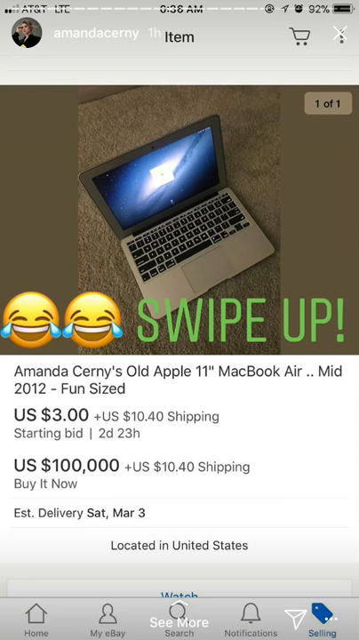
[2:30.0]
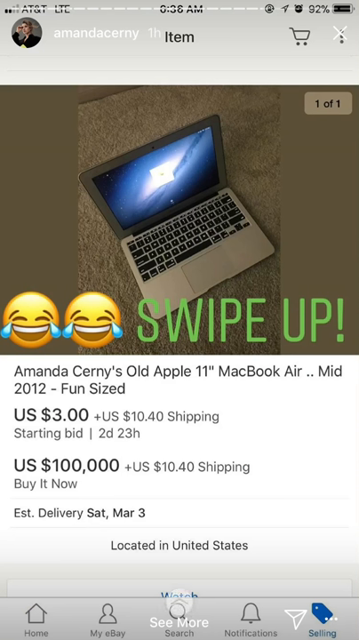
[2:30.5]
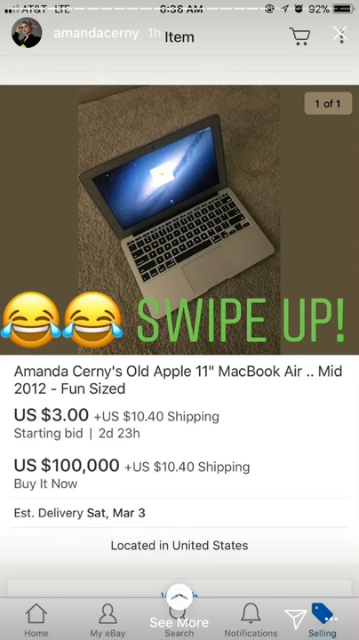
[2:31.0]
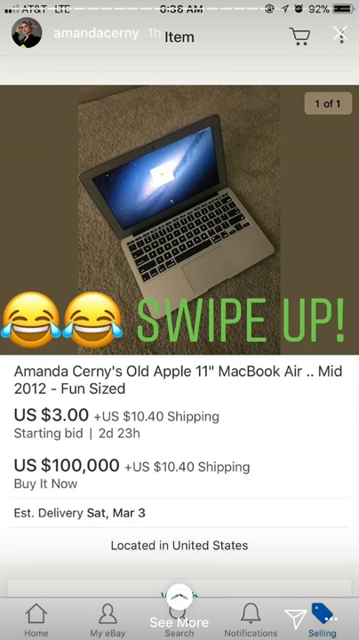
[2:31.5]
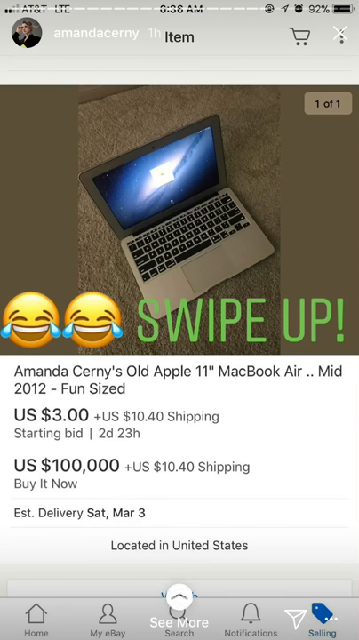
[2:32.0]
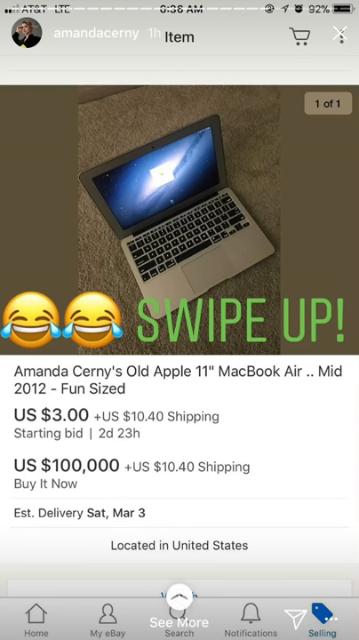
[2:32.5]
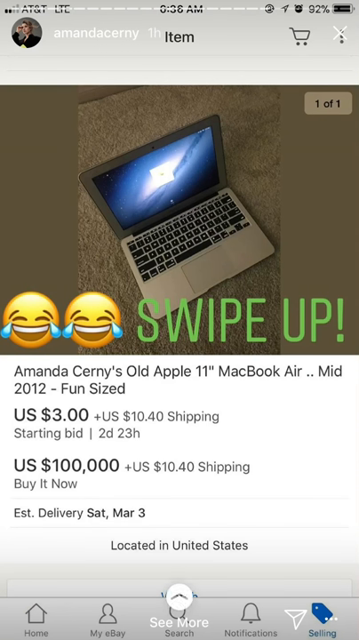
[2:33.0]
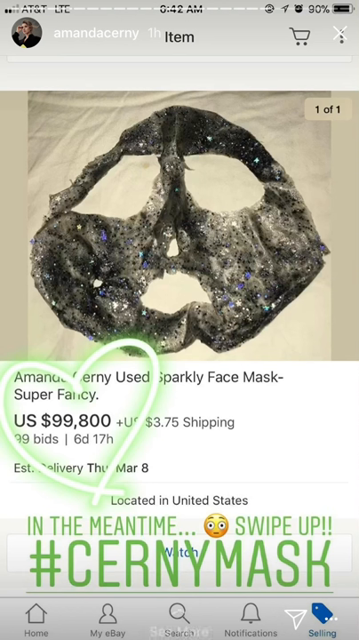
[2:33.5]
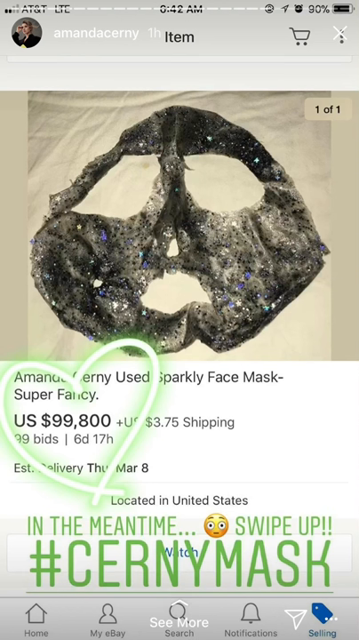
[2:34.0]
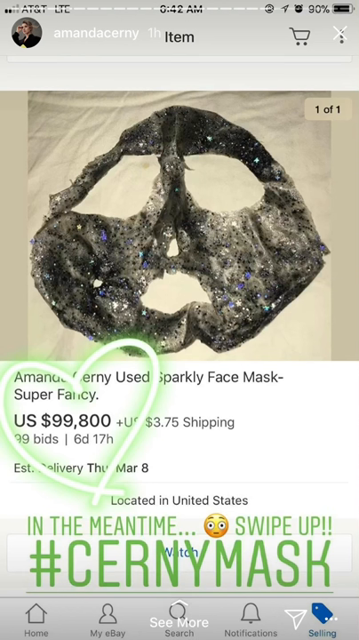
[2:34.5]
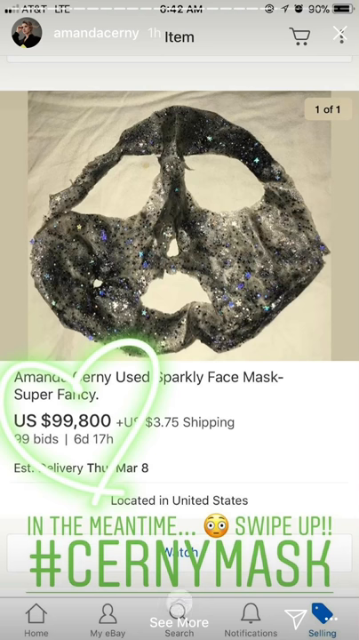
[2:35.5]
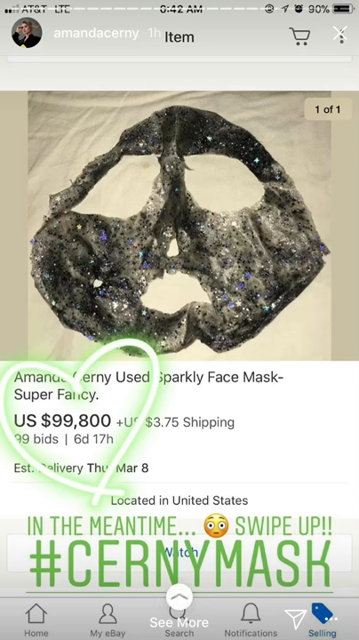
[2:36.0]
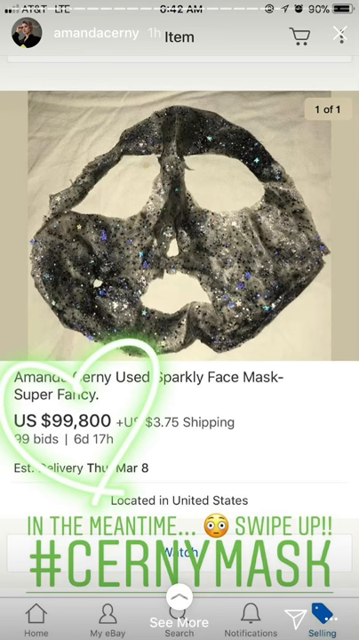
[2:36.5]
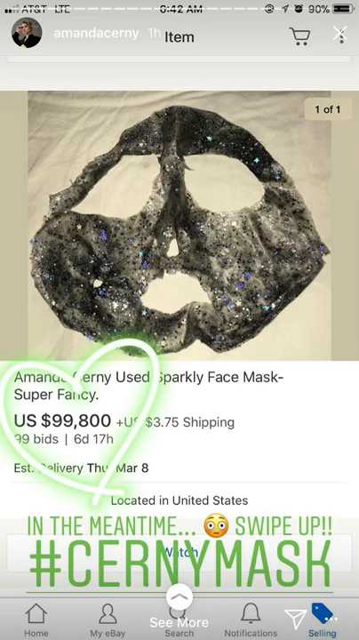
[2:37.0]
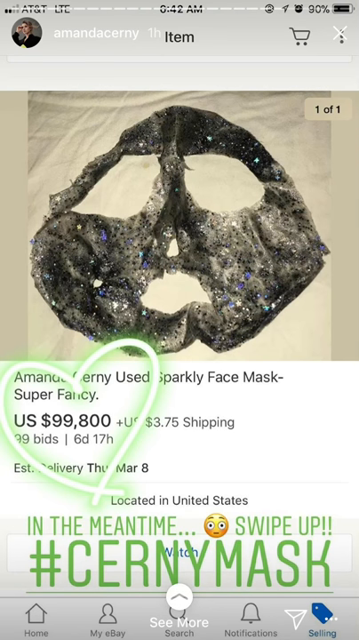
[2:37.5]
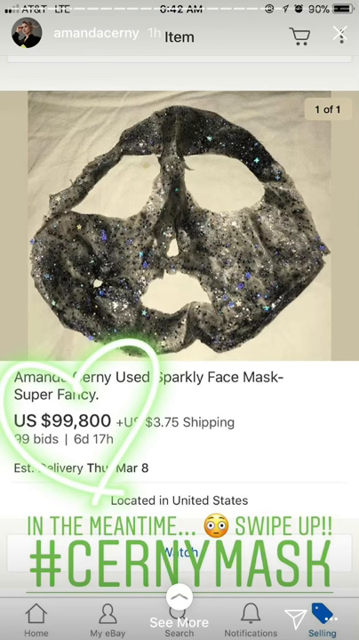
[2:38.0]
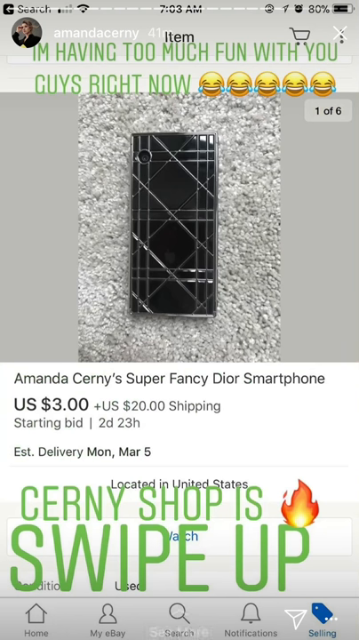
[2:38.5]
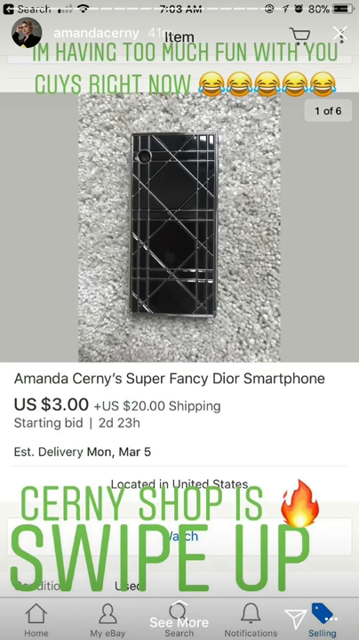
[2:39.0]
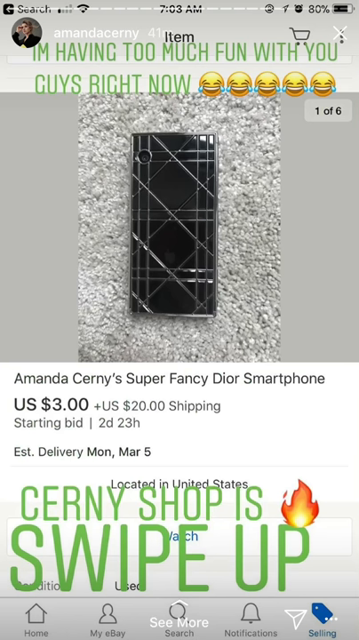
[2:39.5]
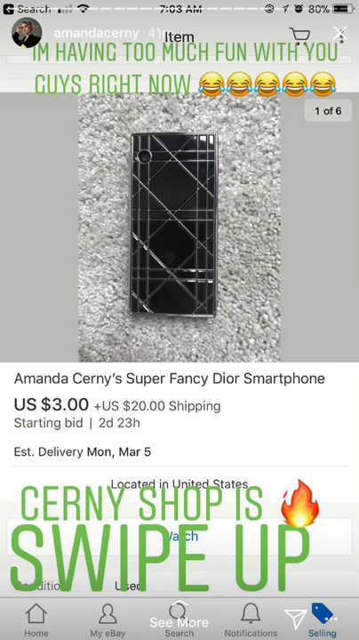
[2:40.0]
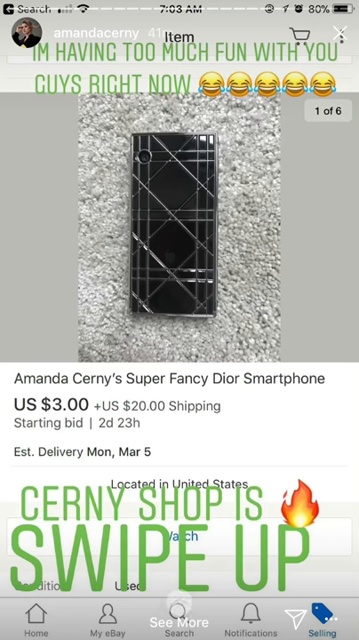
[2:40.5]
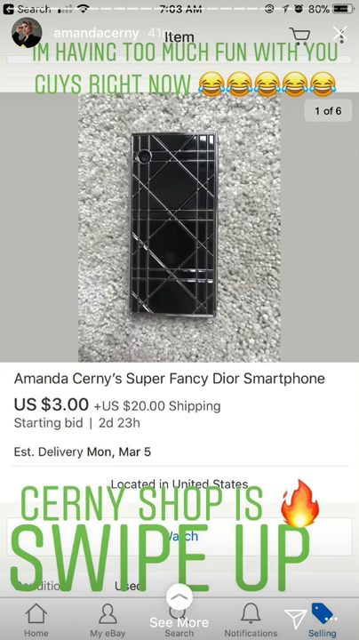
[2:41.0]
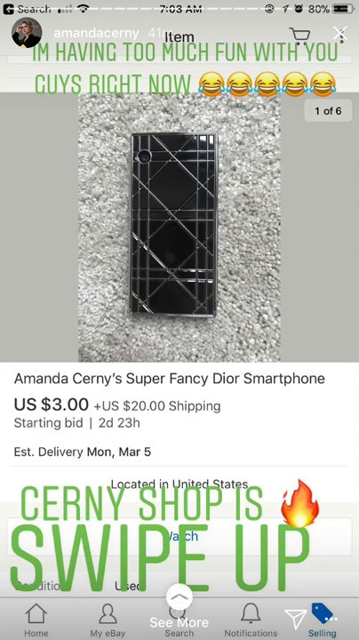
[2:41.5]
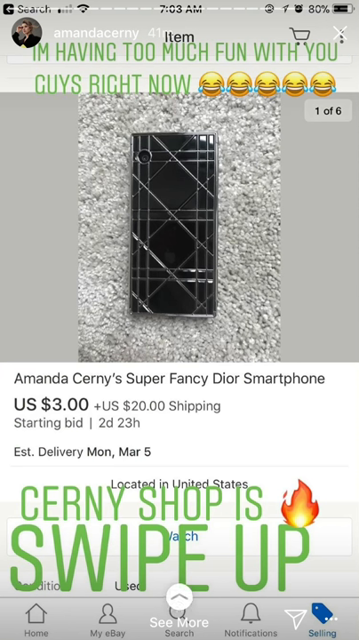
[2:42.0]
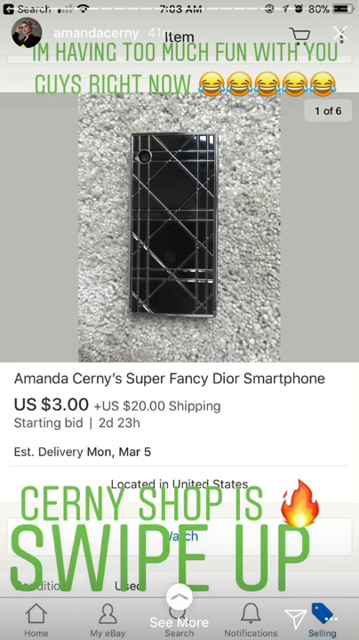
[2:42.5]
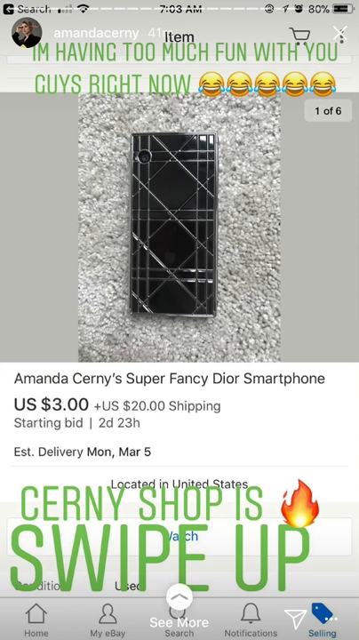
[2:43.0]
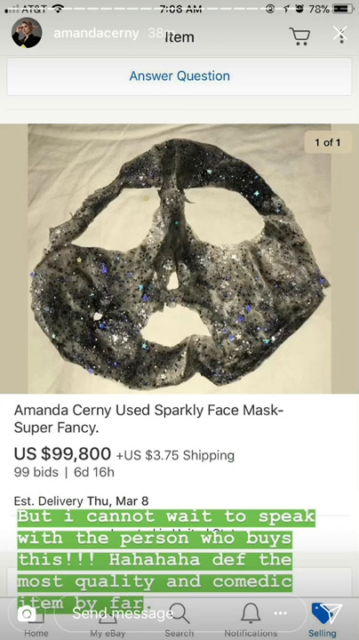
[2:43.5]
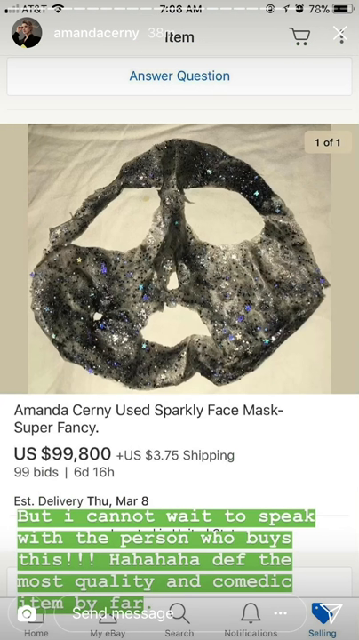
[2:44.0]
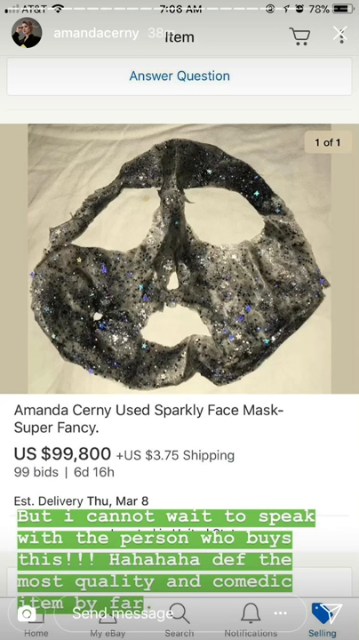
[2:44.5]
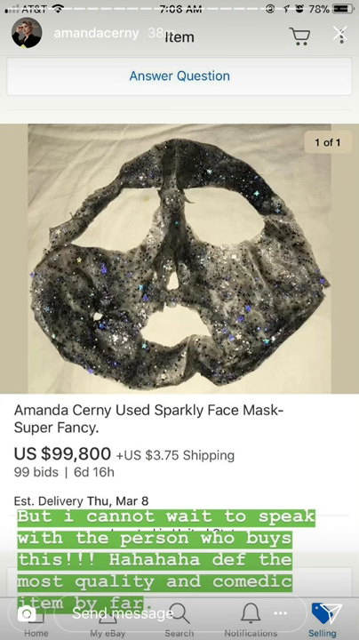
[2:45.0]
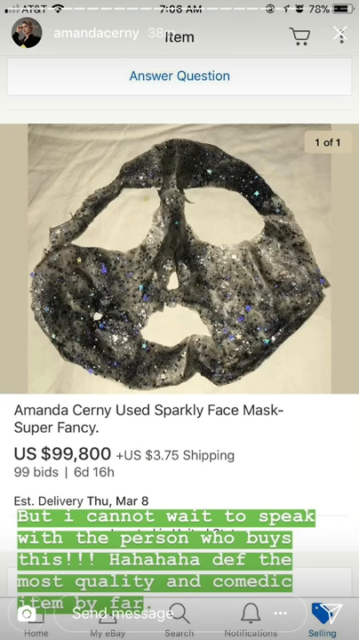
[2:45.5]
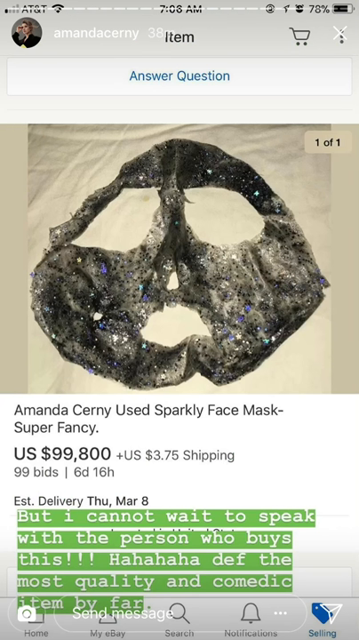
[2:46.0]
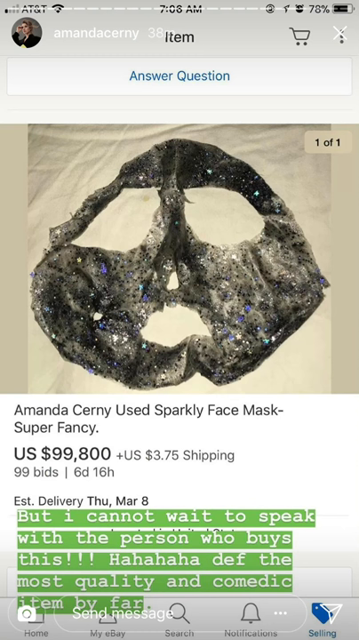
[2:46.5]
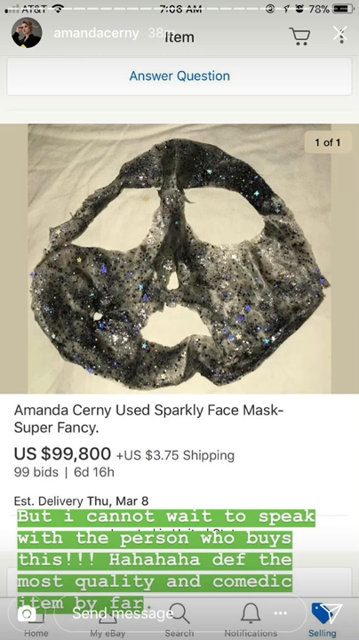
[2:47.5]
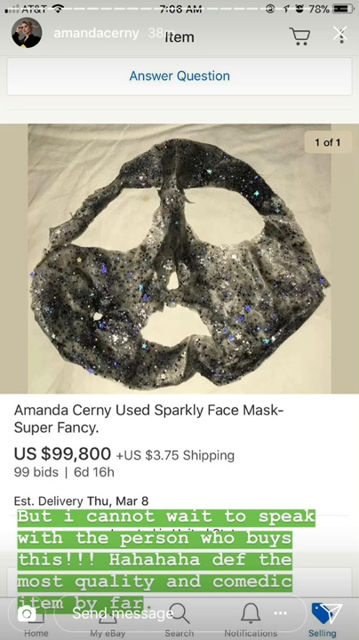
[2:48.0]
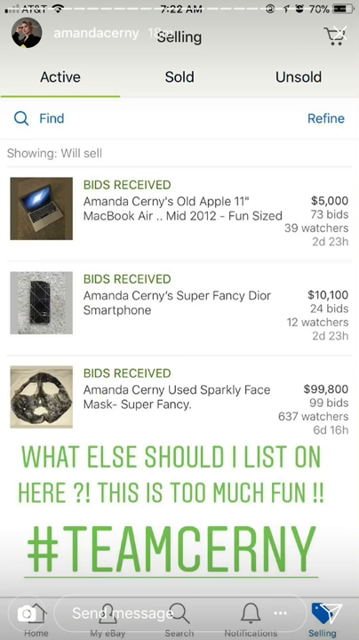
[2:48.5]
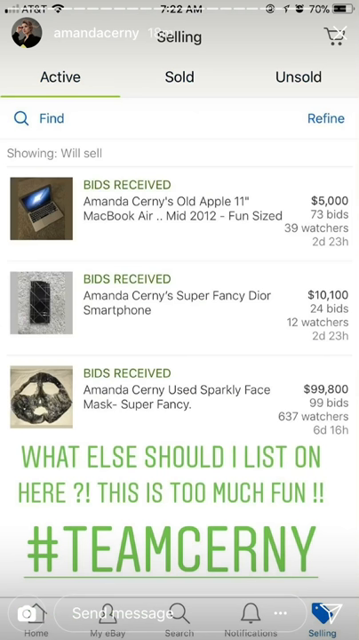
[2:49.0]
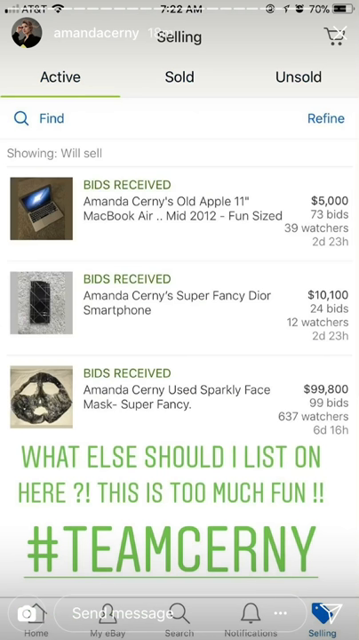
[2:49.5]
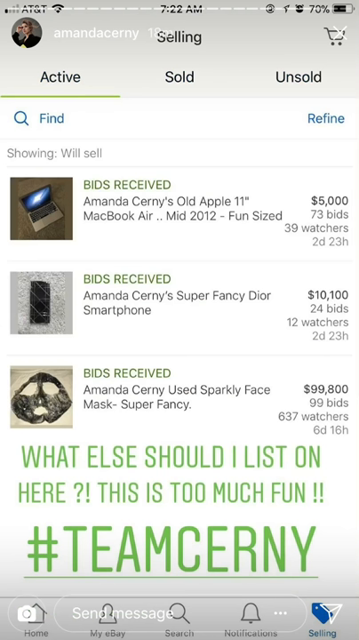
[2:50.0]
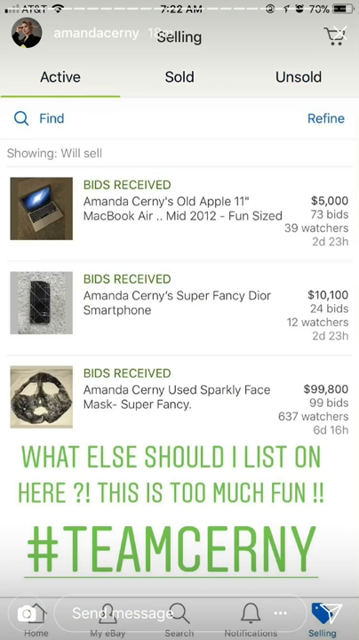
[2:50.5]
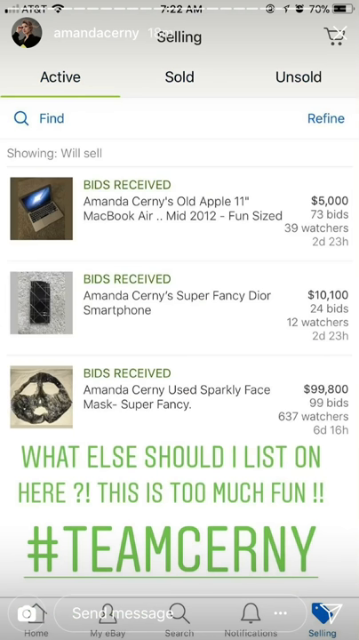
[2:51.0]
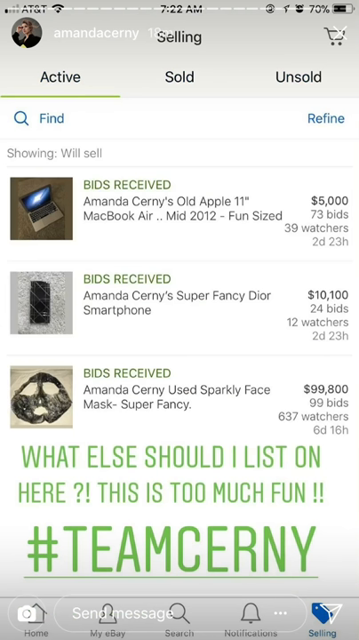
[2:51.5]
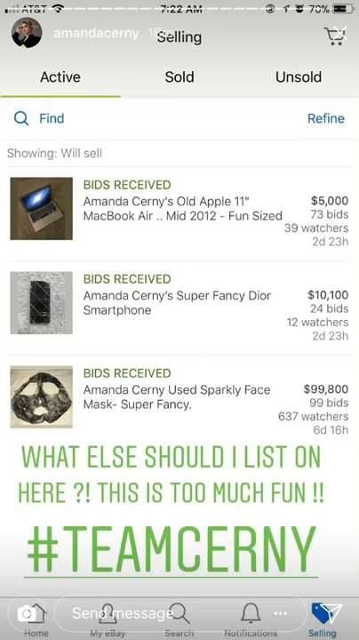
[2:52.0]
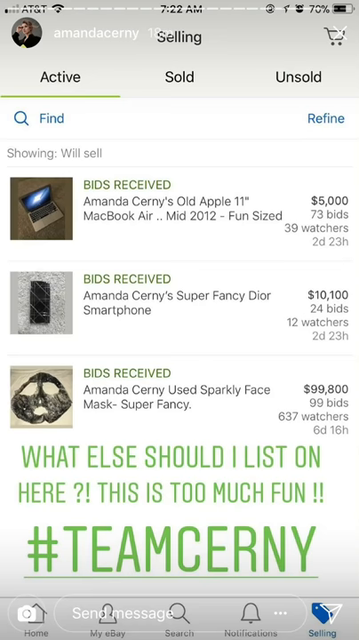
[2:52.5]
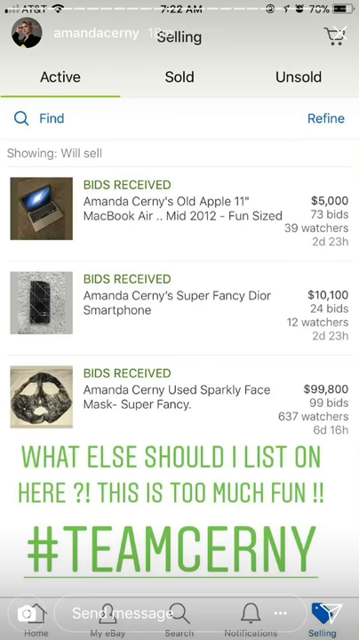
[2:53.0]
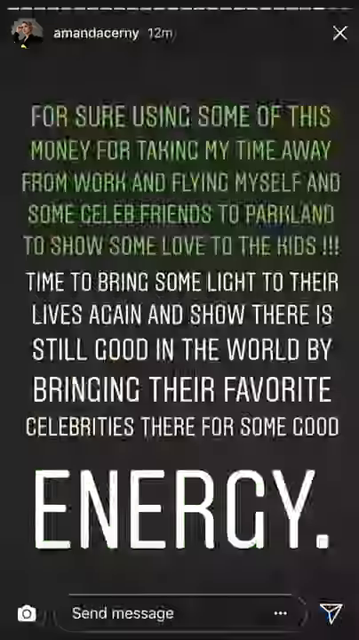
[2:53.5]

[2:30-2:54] A screen shows a sparkly mask with text at the bottom reading "in the meantime swipe up #cerny mask". The video continues to a picture of Amanda Cerny's super fancy duo smartphone with the text "Cerny's shop is lit, swipe up". The mask is shown again with text beneath it beginning "but I cannot wait to speak with the person who buys this hahaha". A screenshot then lists three items on eBay: first, Amanda Cerny's old Apple MacBook Air mid-2012, with 73 bids, 39 watches and 2 days and 23 hours; next, the fancy duo smartphone at 10,124, with 12 watches and 2 days and 23 hours; and last, Amanda's used sparkly face mask, super fancy, at 19,000 and the highest, with 98 bids and 631 watches. The listing reads "what else should I list on here this is too much fun #team cerny", and the video ends on this screenshot.